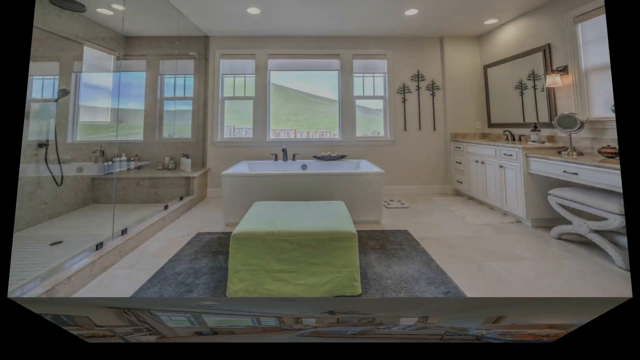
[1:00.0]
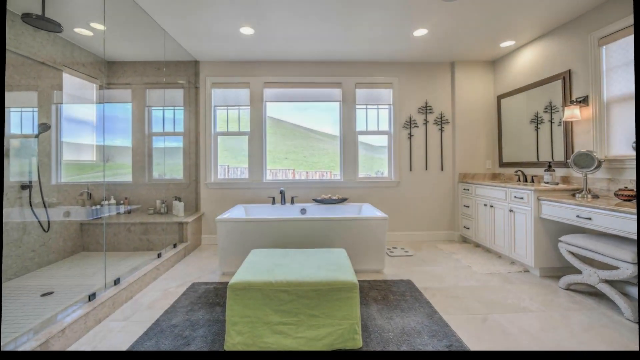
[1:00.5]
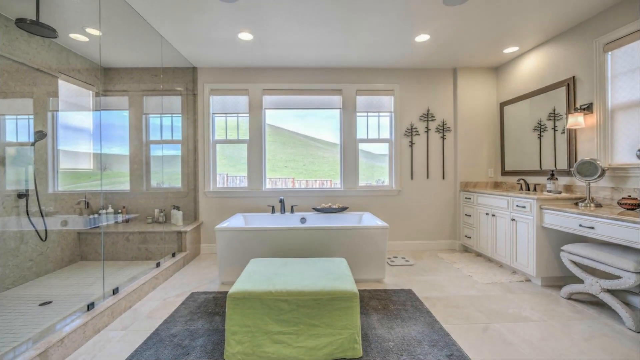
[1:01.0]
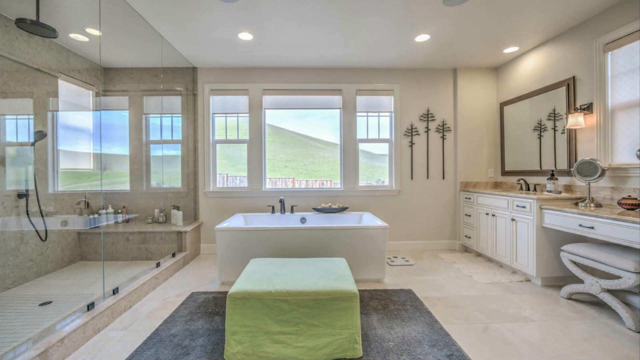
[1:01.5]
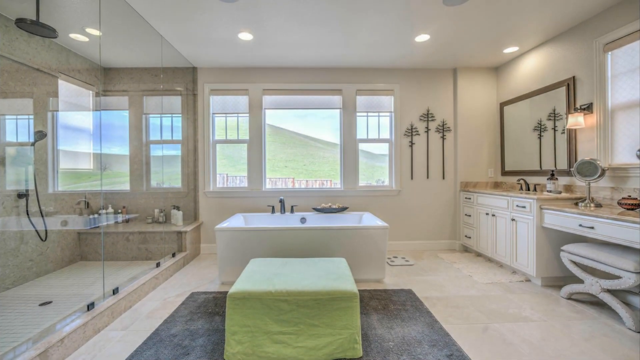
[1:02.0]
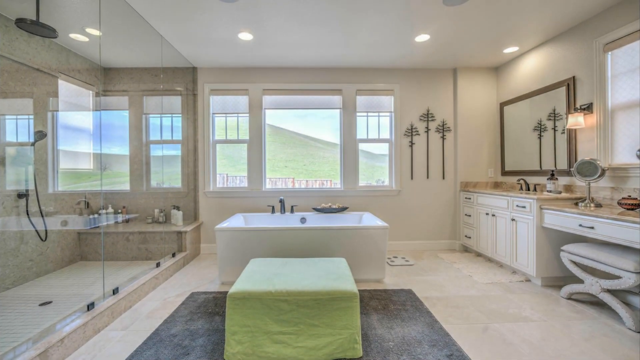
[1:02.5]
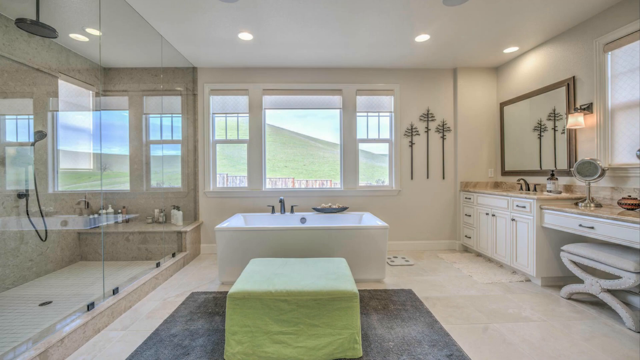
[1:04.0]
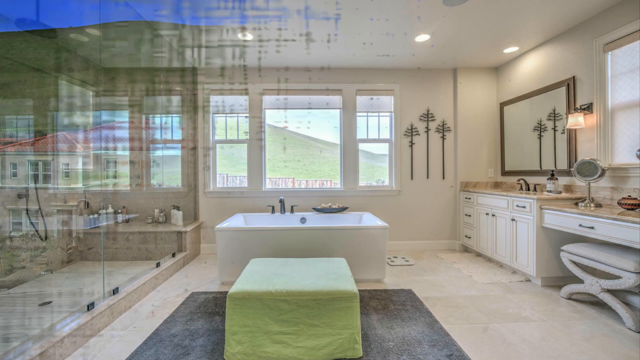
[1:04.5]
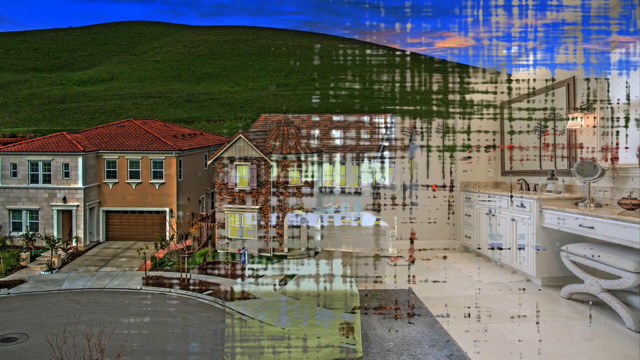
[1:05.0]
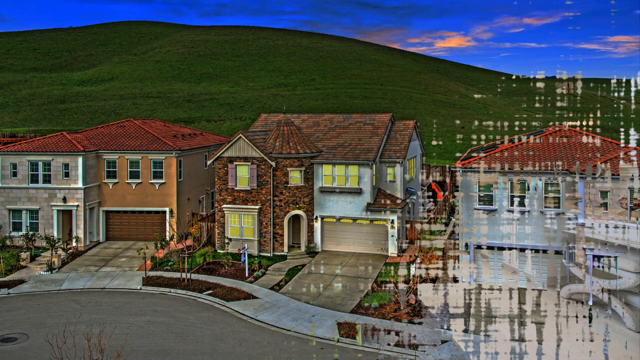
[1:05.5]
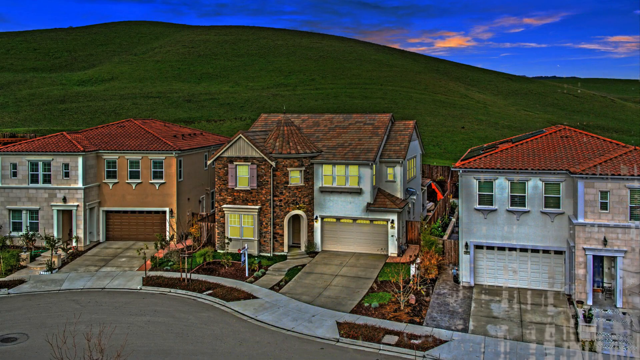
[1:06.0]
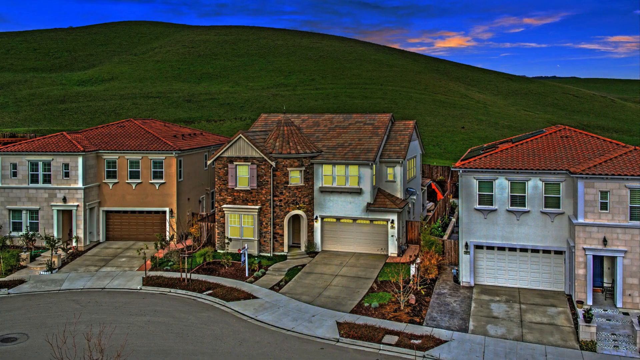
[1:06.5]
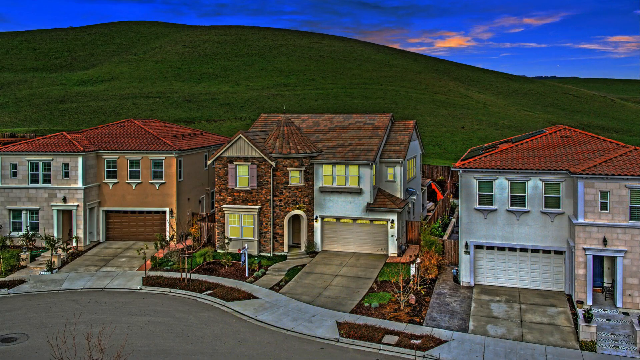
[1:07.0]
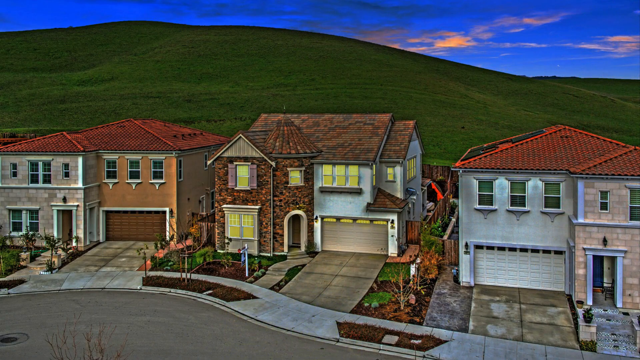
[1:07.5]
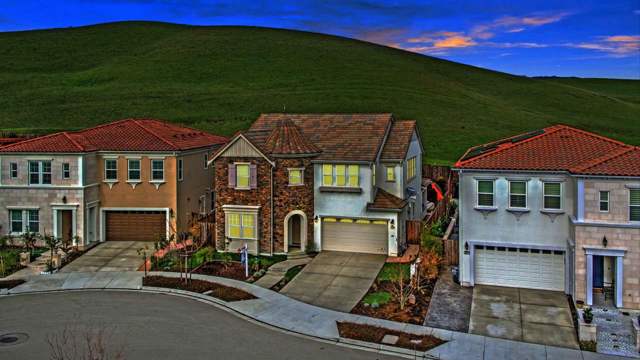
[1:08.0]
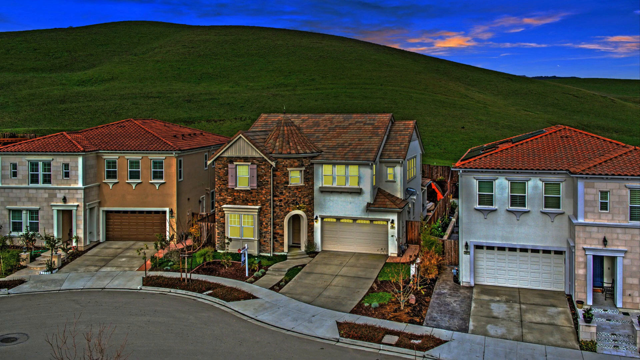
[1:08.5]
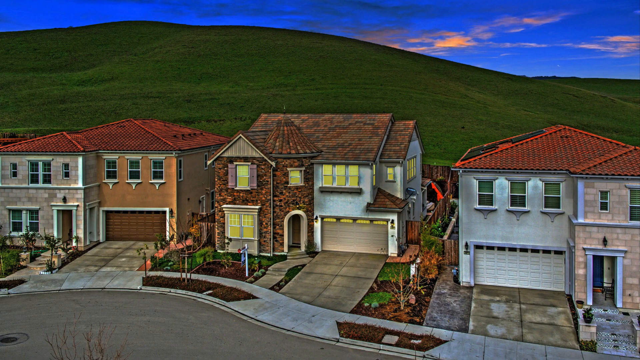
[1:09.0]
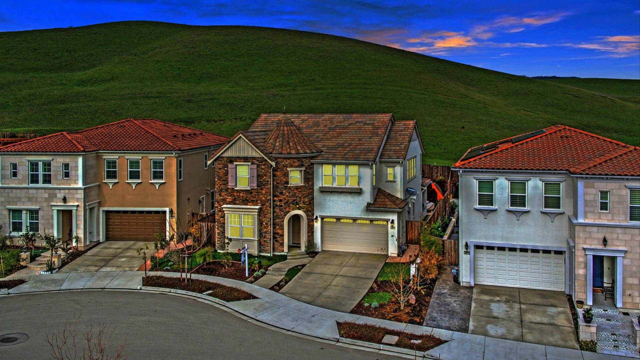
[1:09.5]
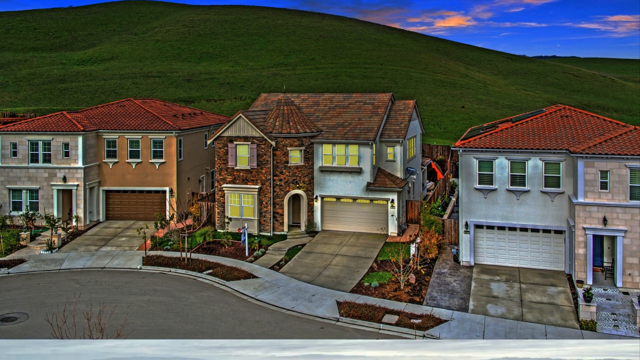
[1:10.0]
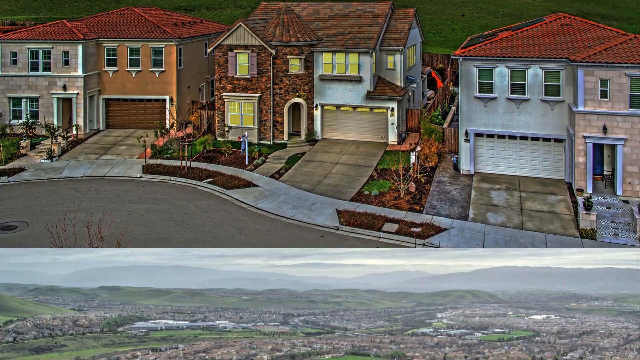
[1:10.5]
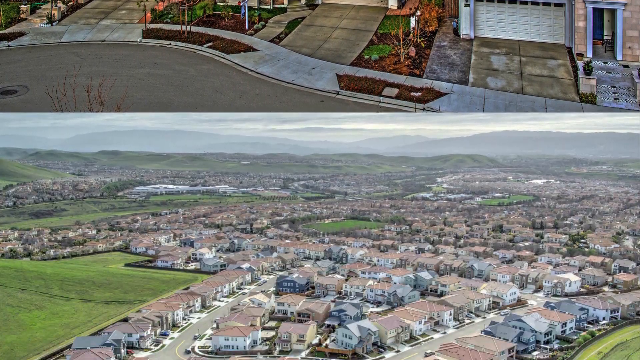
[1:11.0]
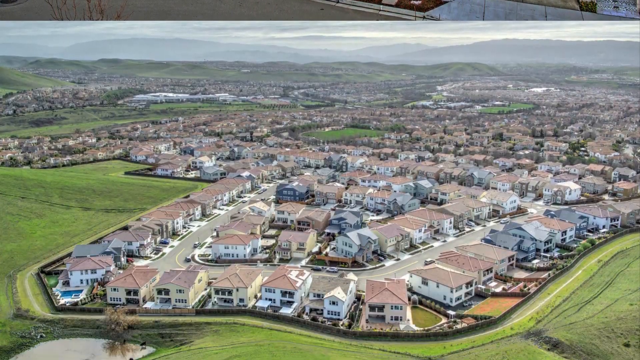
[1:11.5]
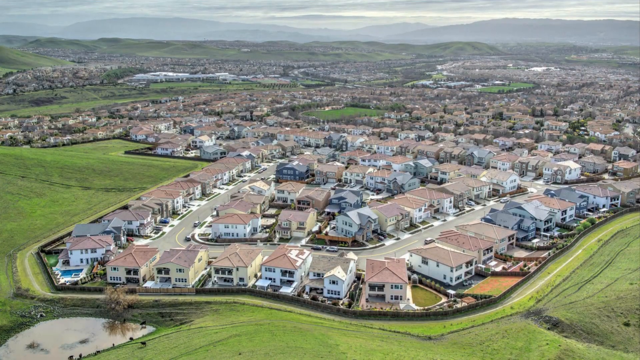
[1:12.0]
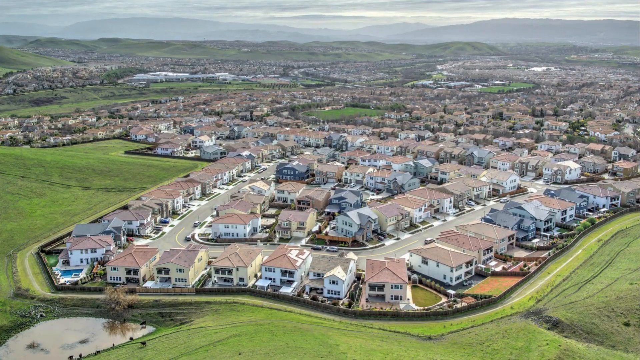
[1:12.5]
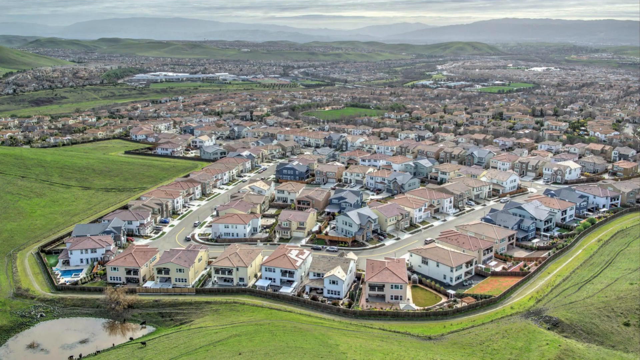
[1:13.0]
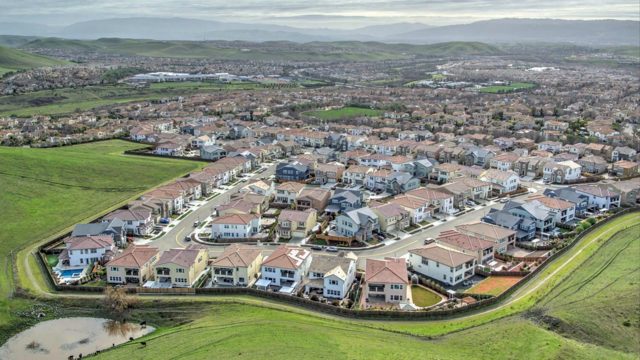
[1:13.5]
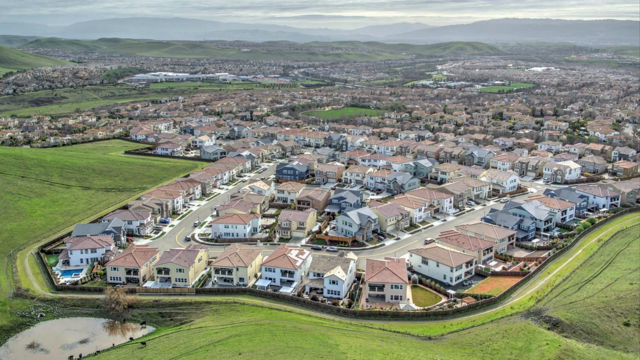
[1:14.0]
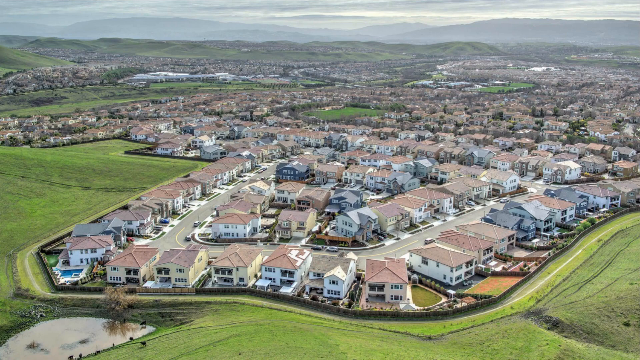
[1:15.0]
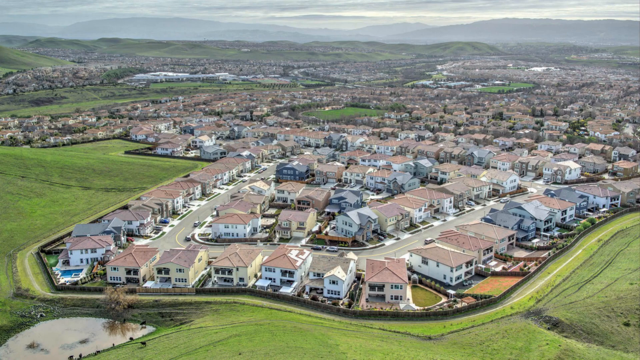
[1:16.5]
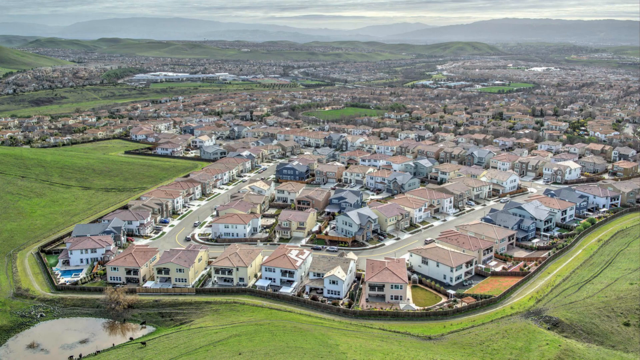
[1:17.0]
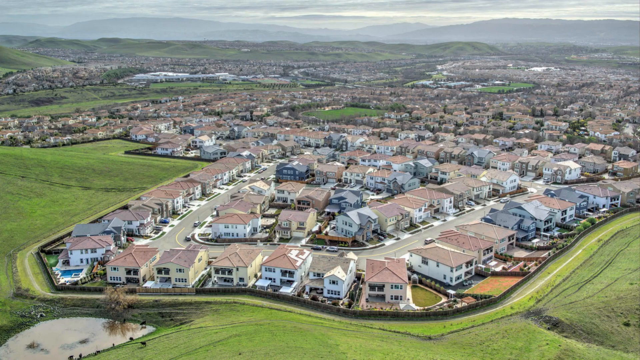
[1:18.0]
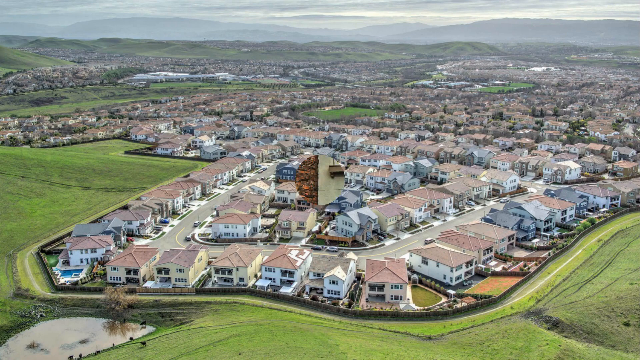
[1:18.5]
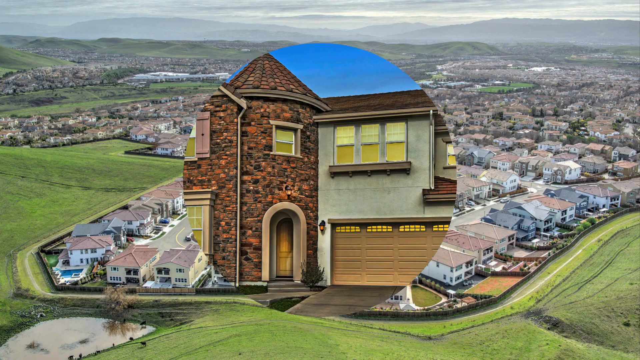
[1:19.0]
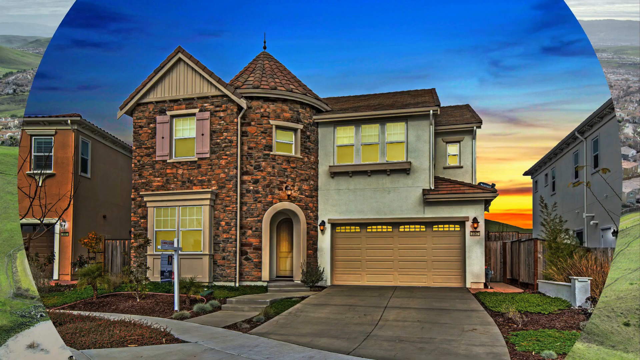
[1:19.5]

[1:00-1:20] A wall is shown, followed by the exterior and the full elevation of the building. The video shows where the property is located and how many properties are involved. A bathroom is also shown.